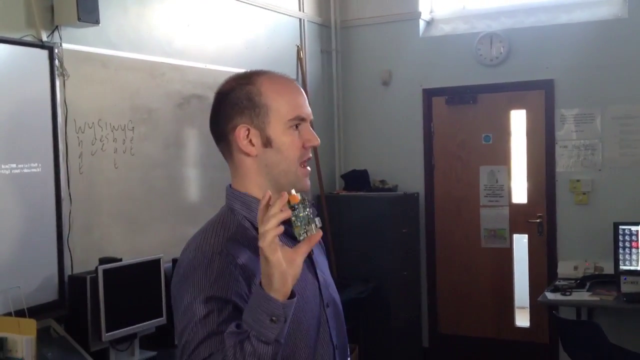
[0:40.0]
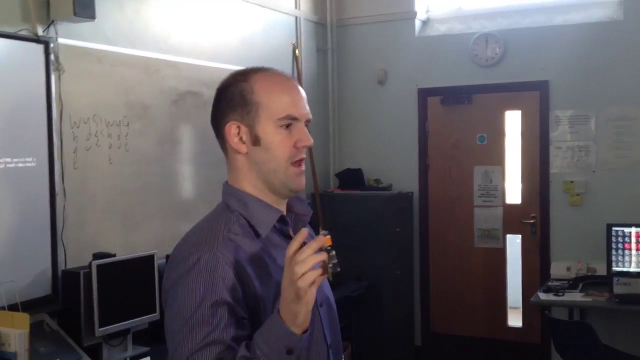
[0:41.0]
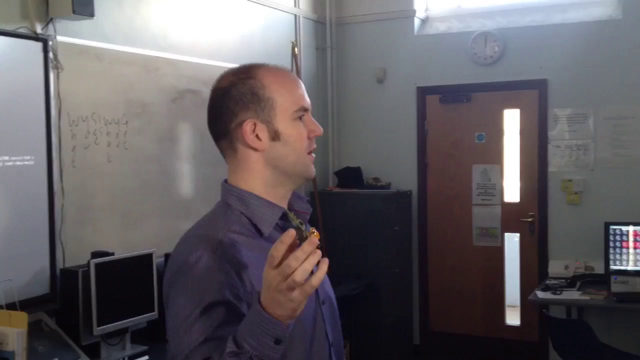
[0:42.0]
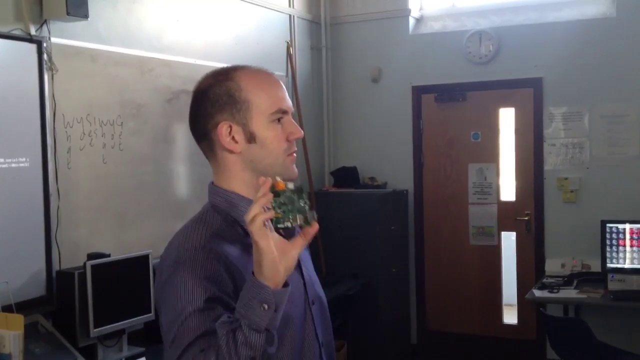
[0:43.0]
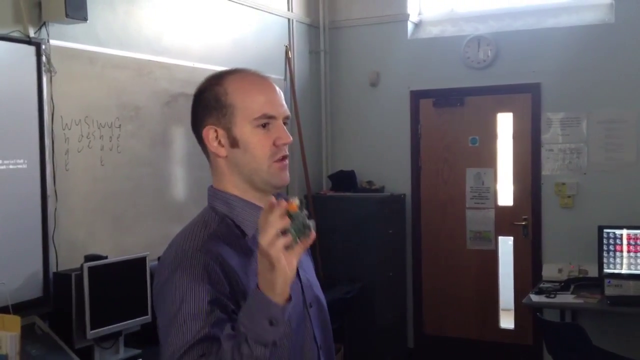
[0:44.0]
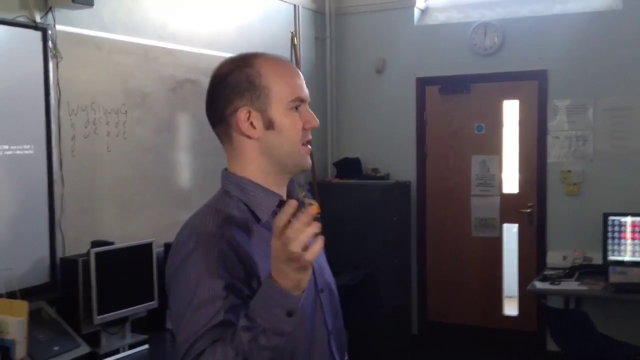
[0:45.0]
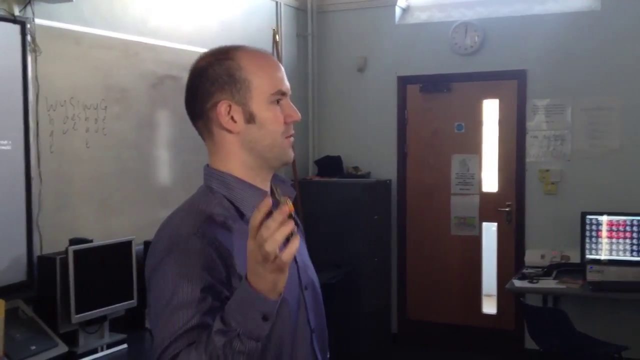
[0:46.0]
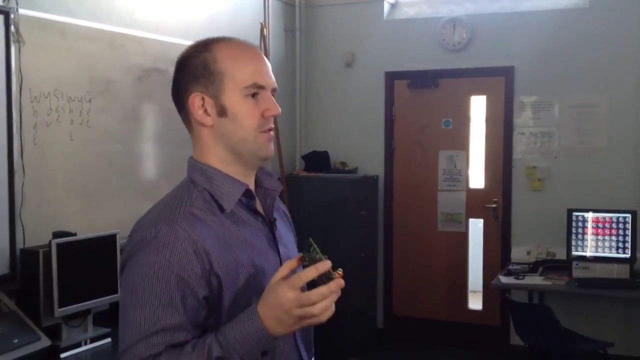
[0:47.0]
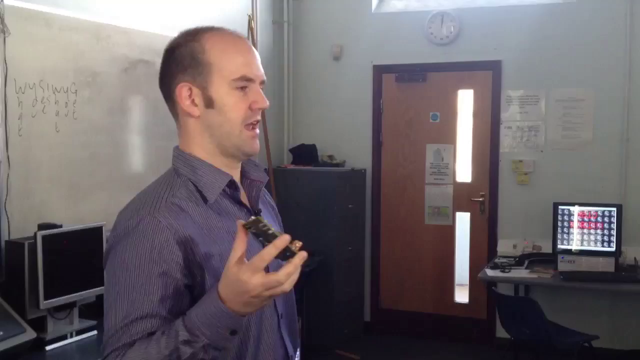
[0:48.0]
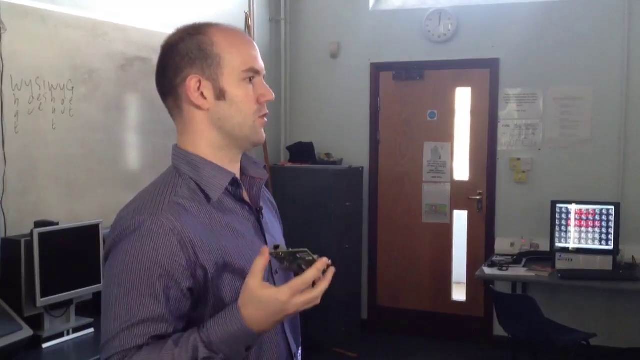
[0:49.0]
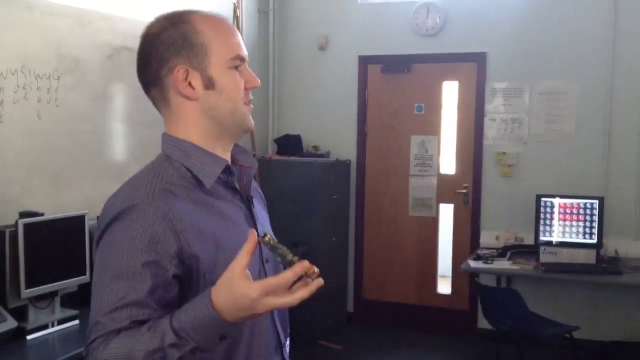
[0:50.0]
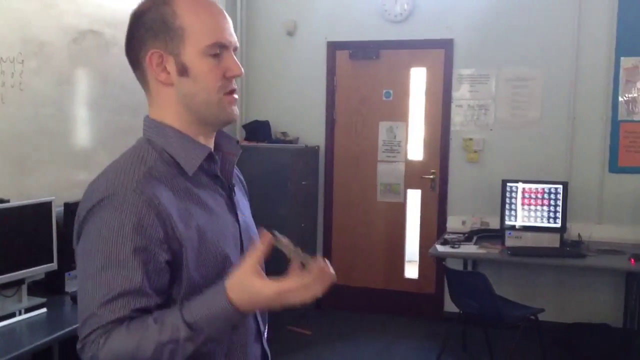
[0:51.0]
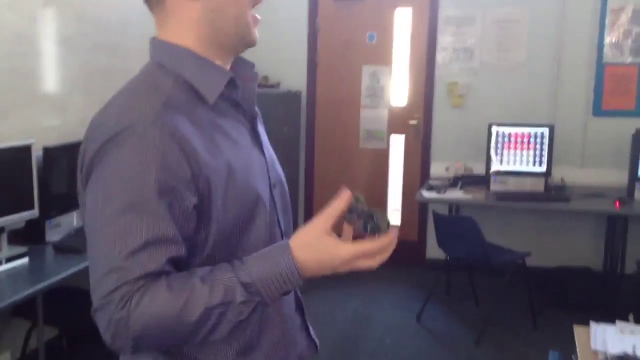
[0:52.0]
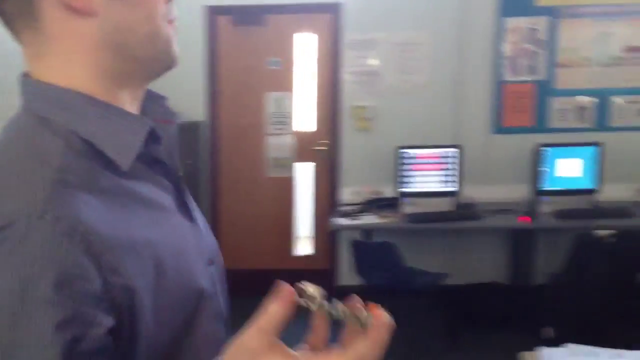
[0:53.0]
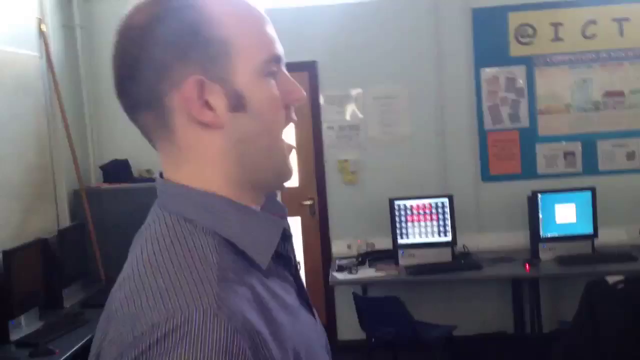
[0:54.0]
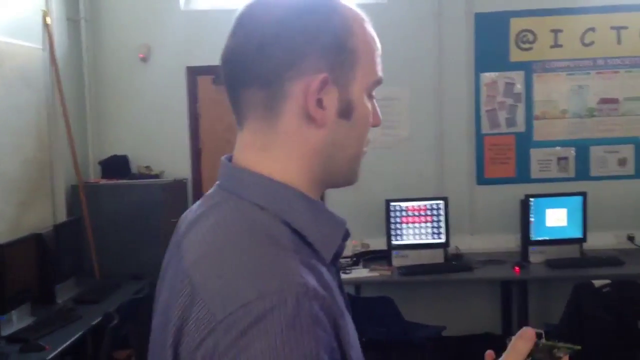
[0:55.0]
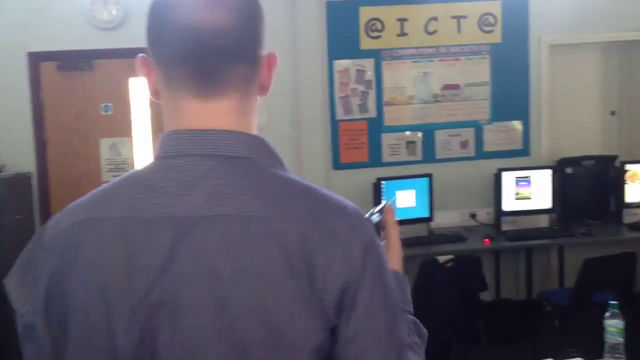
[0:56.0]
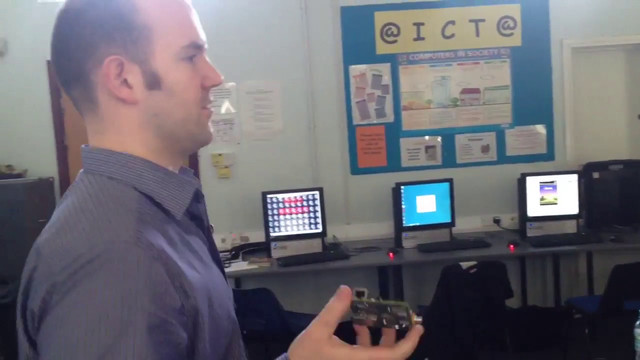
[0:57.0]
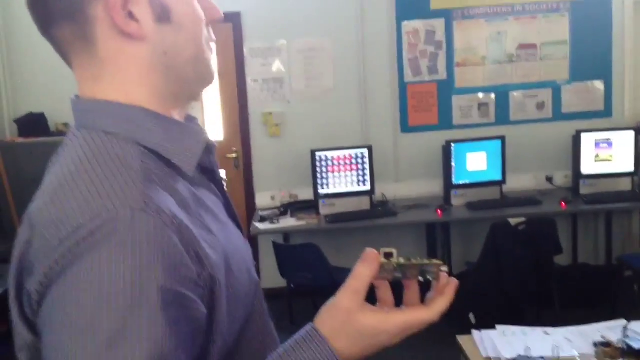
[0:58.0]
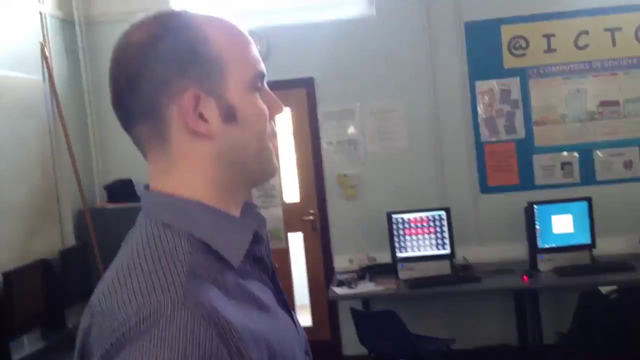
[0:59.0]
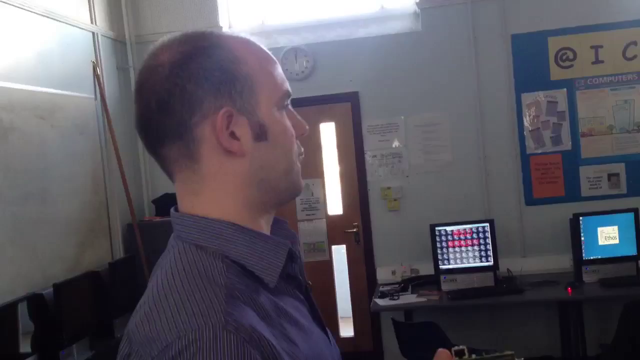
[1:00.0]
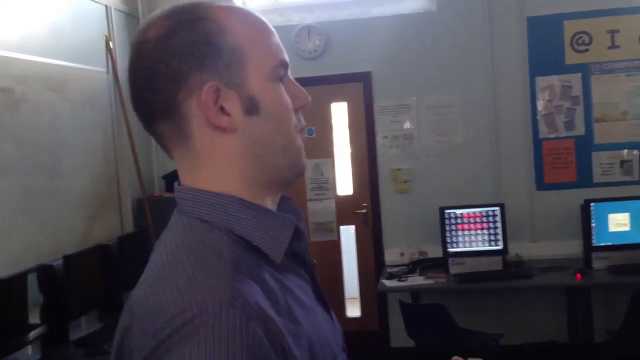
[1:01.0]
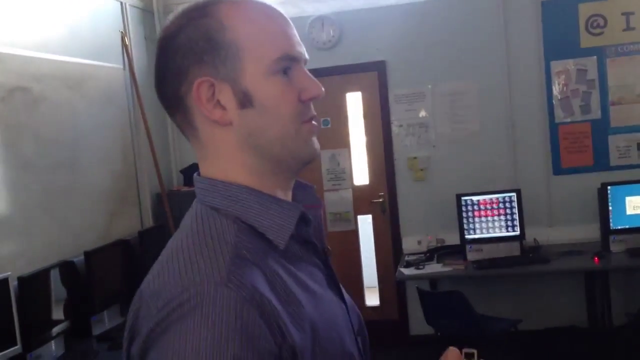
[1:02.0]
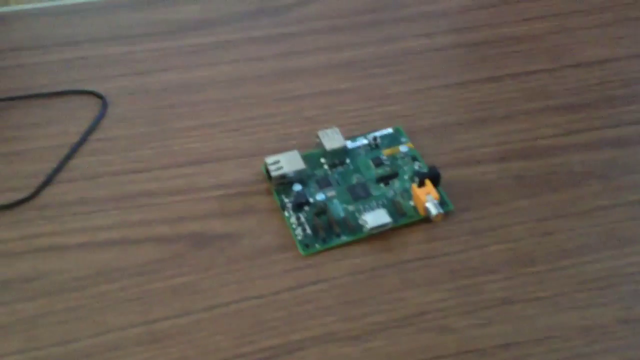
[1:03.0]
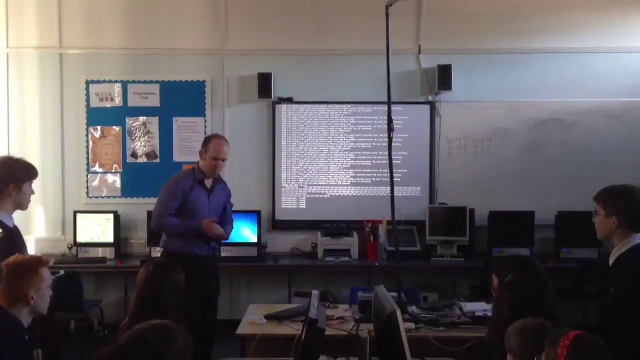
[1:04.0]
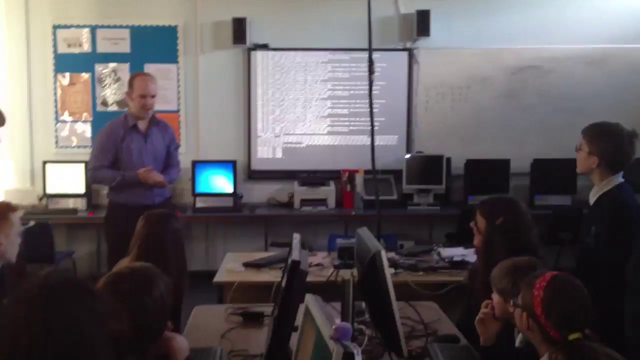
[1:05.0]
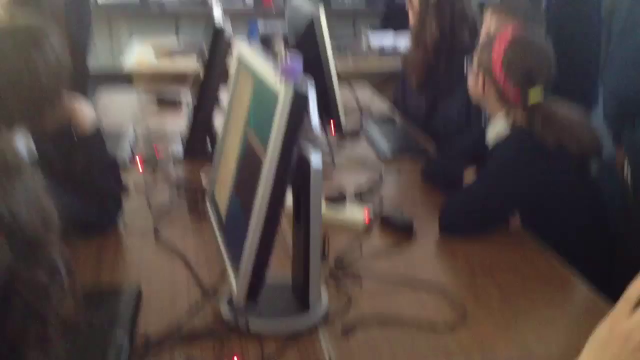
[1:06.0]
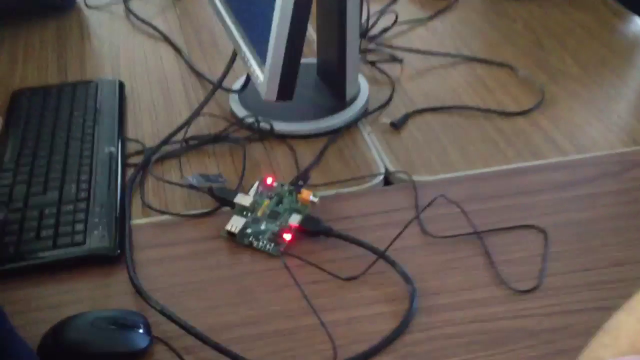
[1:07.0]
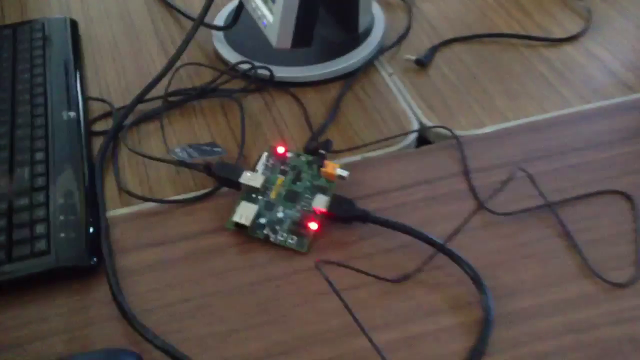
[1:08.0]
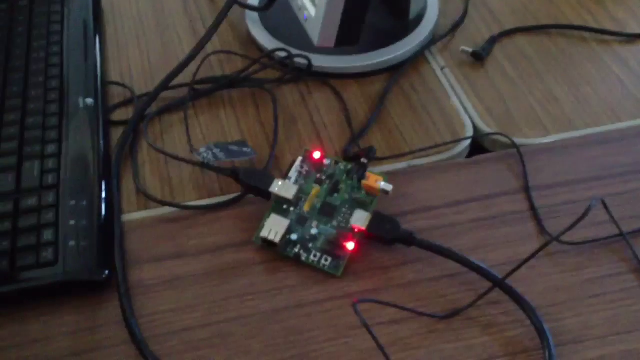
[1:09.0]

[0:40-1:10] The teacher lowers his hand a bit, then swings it out to the right, still holding the circuit board. He flips his wrist upright, palm out, shakes it slightly as he talks, then lowers his hand slightly; as he talks, his hand tends to move and jerk. The camera is kind of shaky as it hovers closer in on him, showing his profile, and sometimes zooms down to the circuit boards and back up. The video cuts to a view of the circuit board on the wooden desk, then to a different, slightly darker video. The teacher stands on the left side of the projection screen. The students are lined up at long benches or tables on each side, turning left or right to look at him, with their monitors in front of them. The camera zooms in on the little circuit board connected to a bunch of USBs.